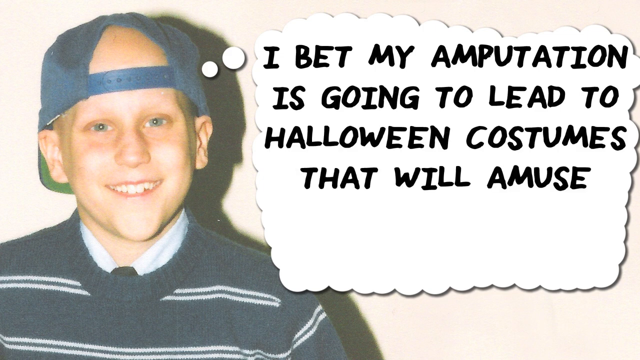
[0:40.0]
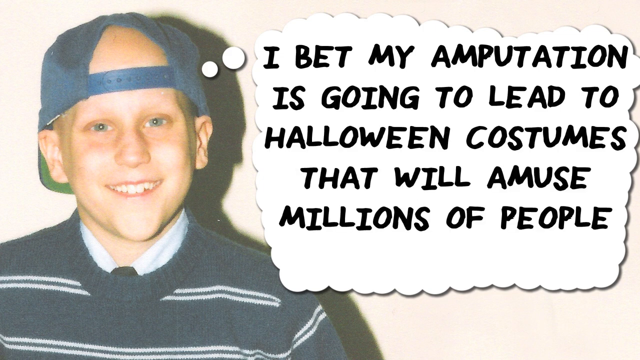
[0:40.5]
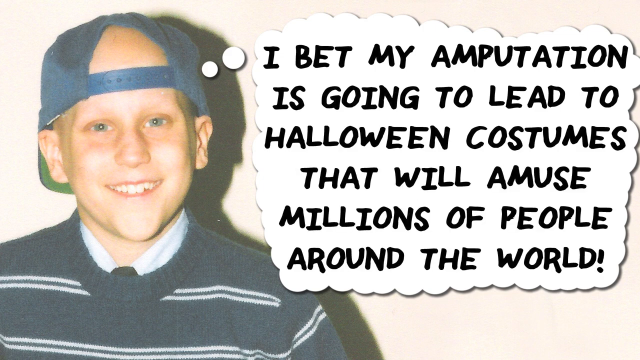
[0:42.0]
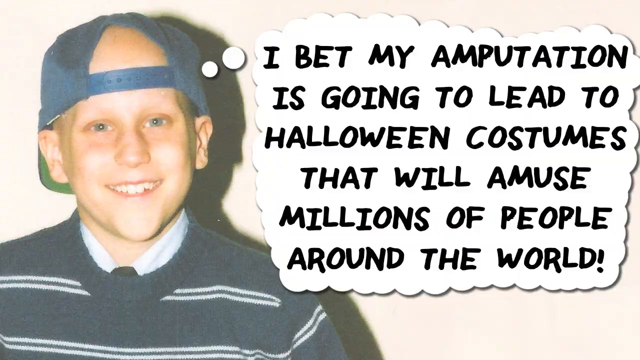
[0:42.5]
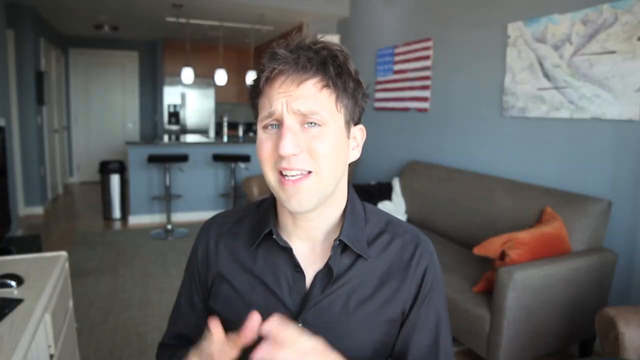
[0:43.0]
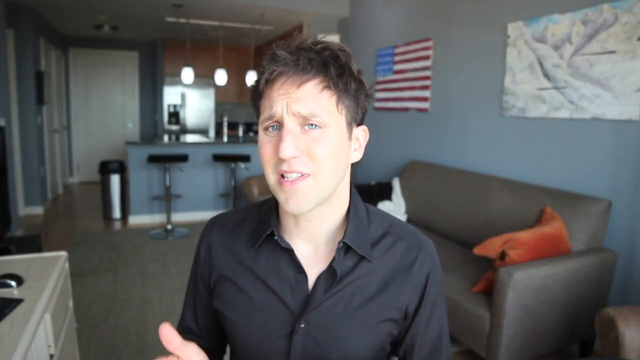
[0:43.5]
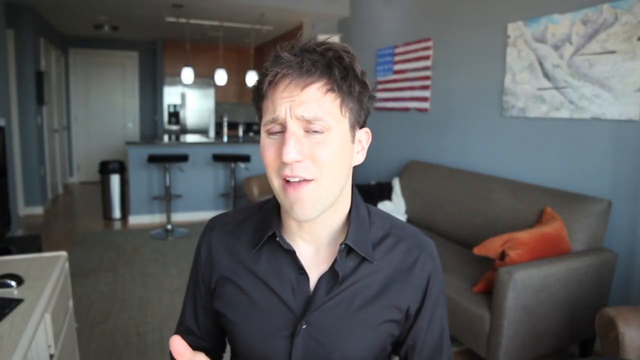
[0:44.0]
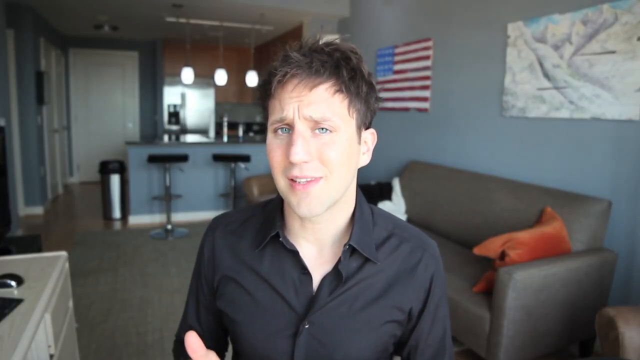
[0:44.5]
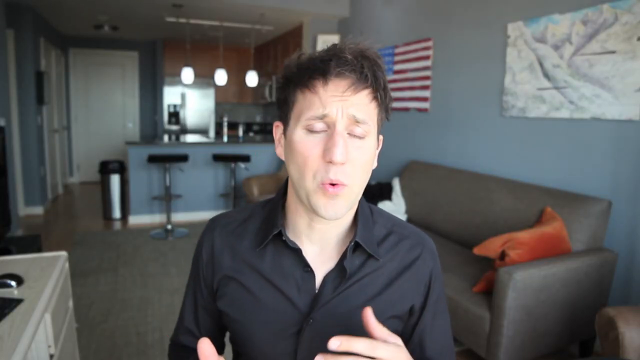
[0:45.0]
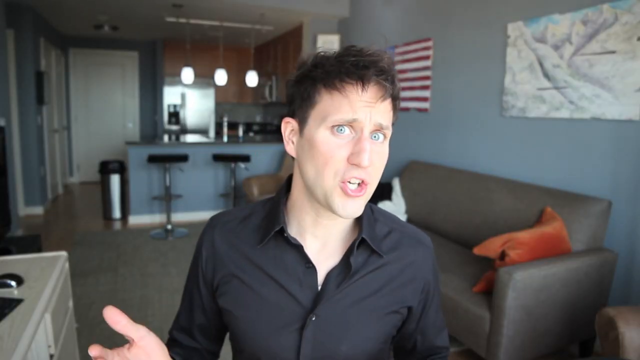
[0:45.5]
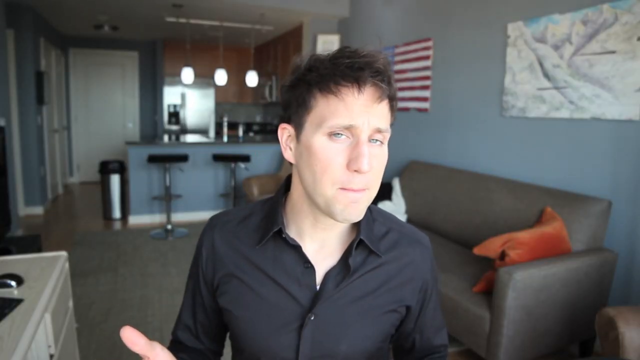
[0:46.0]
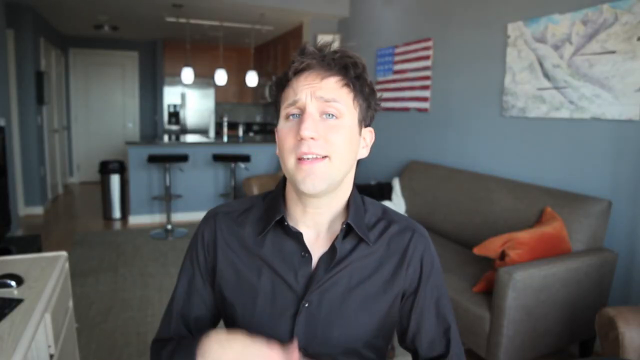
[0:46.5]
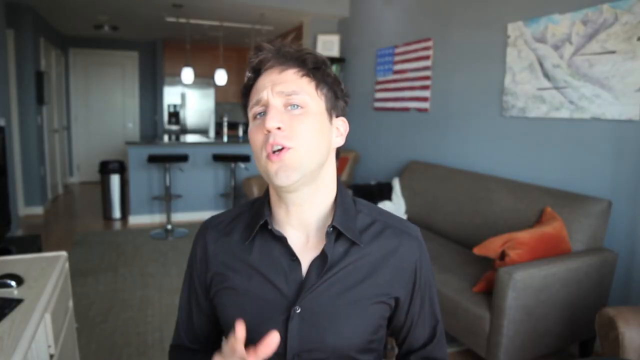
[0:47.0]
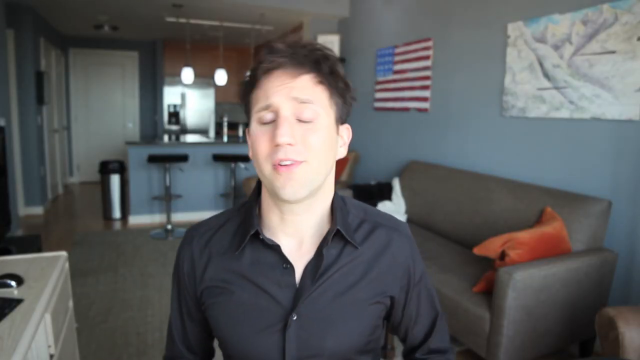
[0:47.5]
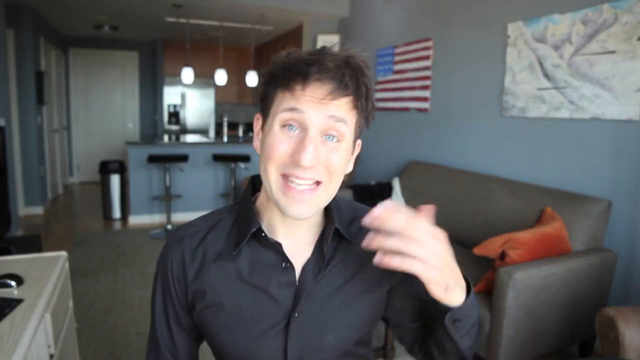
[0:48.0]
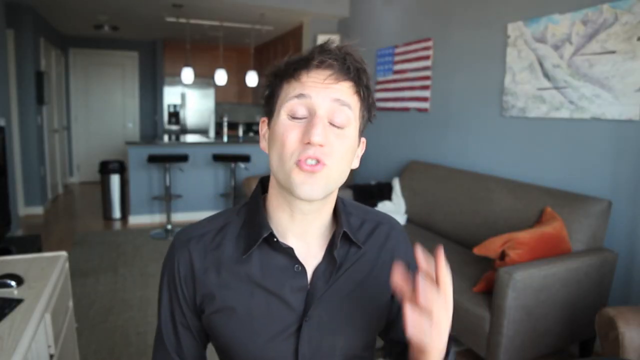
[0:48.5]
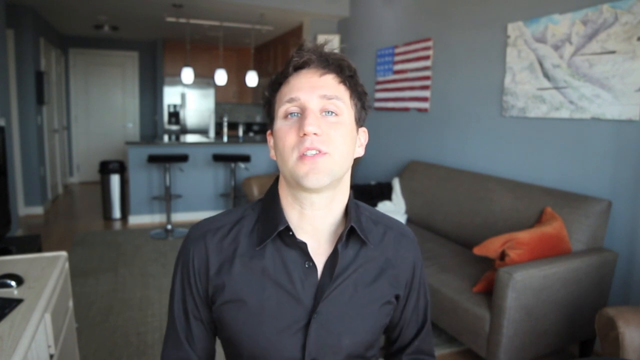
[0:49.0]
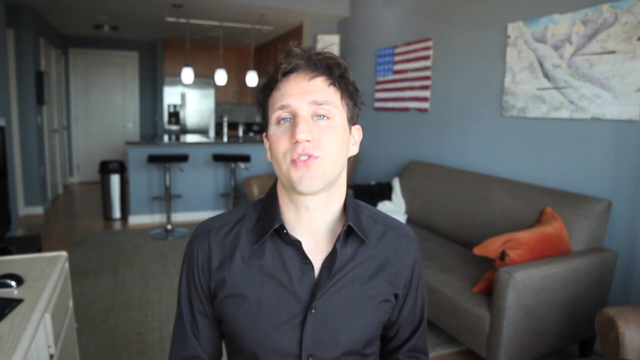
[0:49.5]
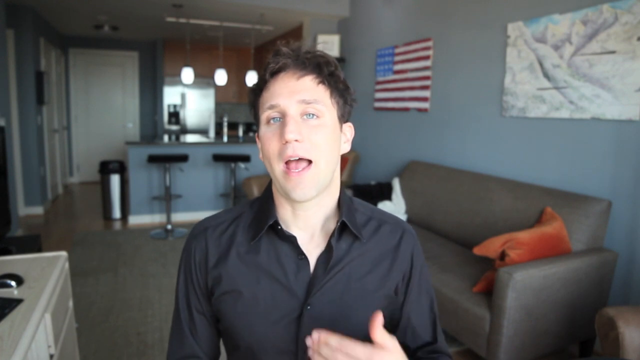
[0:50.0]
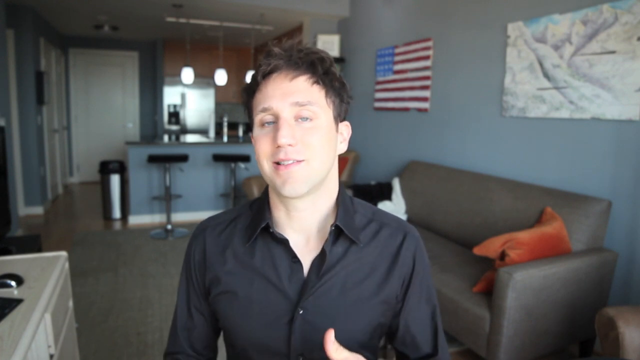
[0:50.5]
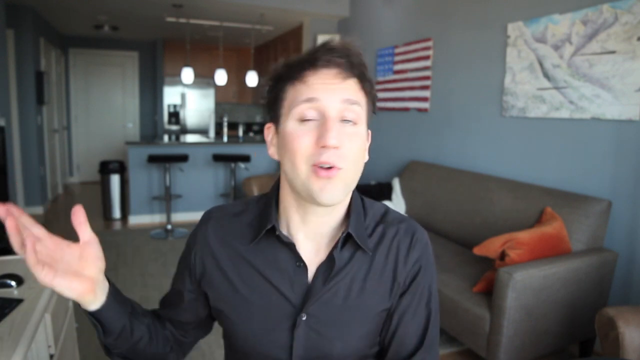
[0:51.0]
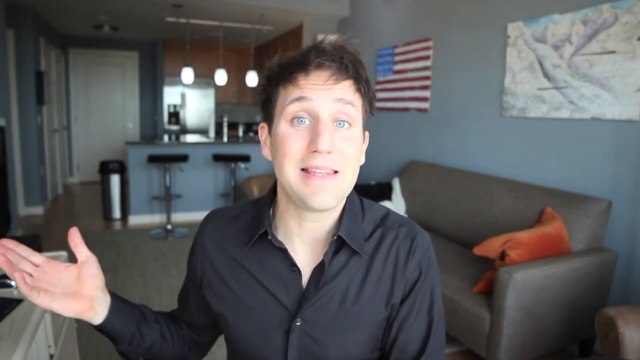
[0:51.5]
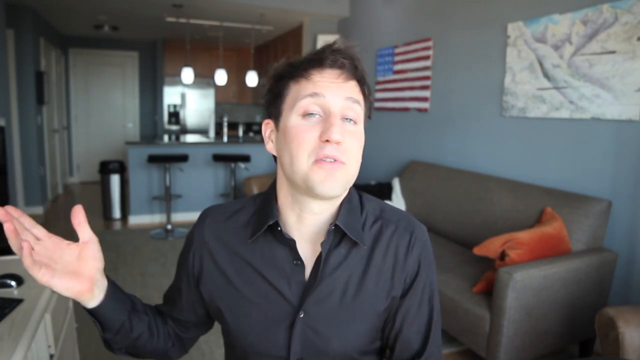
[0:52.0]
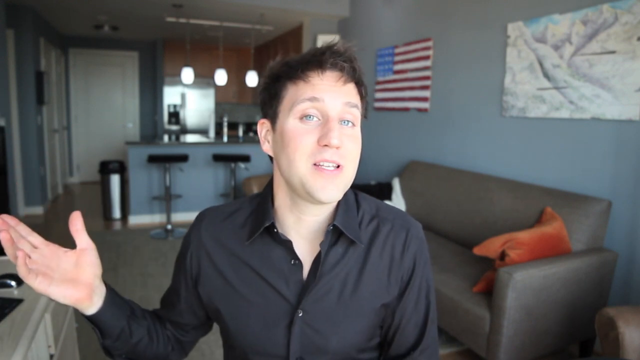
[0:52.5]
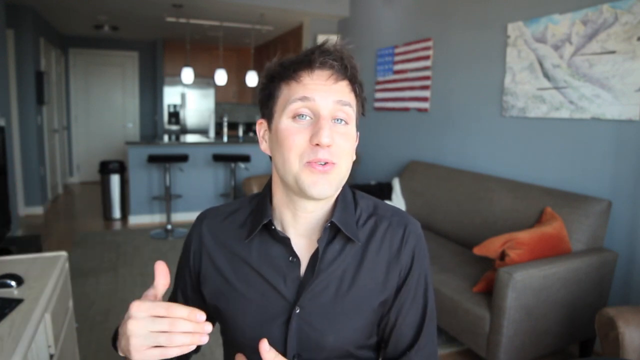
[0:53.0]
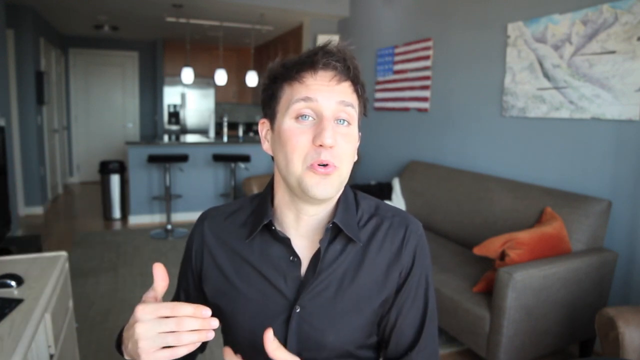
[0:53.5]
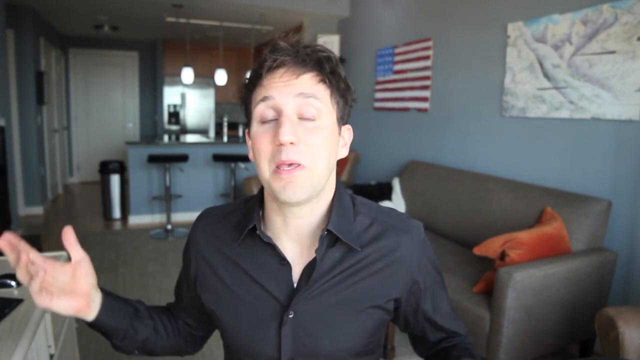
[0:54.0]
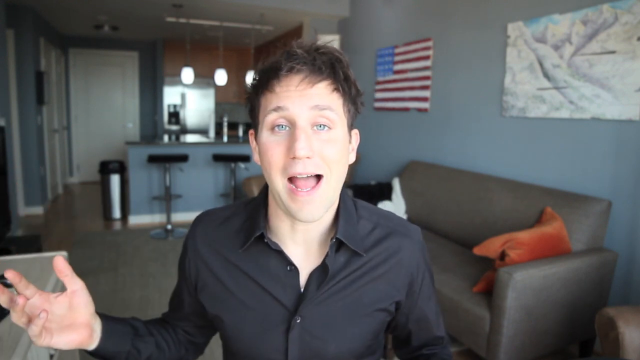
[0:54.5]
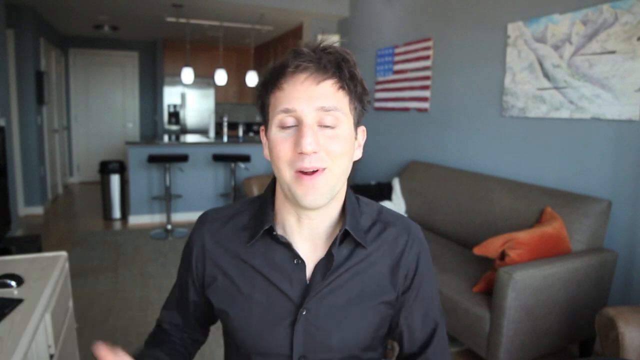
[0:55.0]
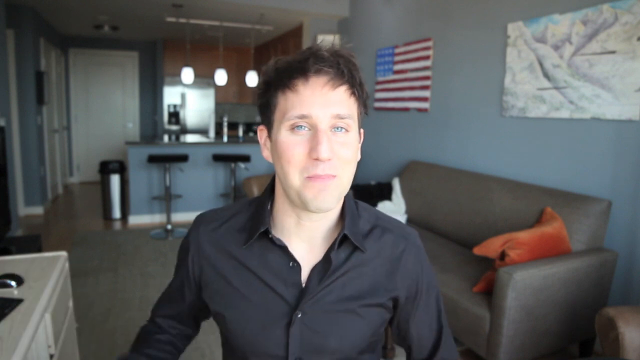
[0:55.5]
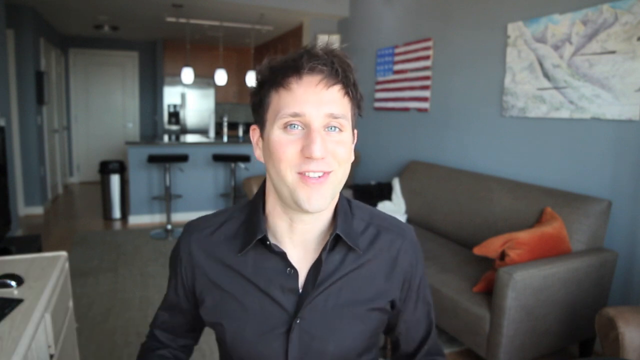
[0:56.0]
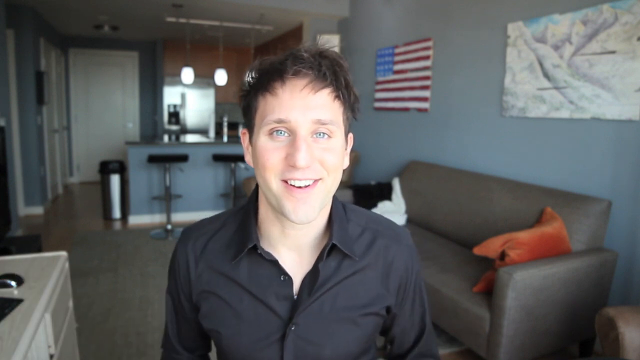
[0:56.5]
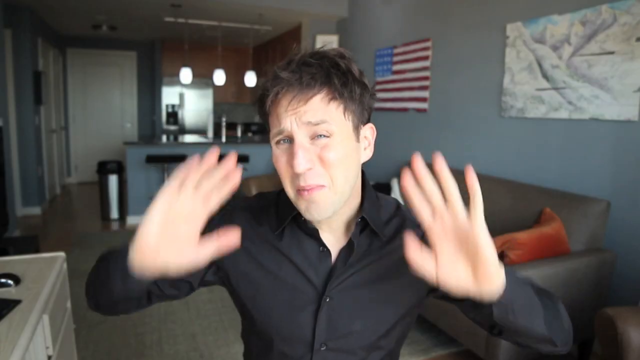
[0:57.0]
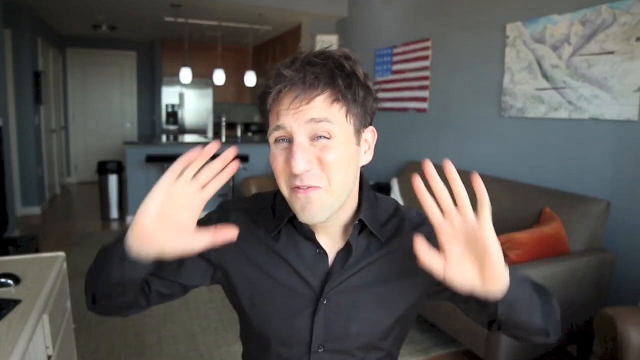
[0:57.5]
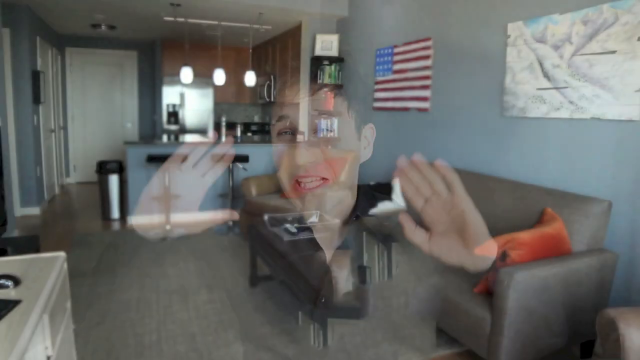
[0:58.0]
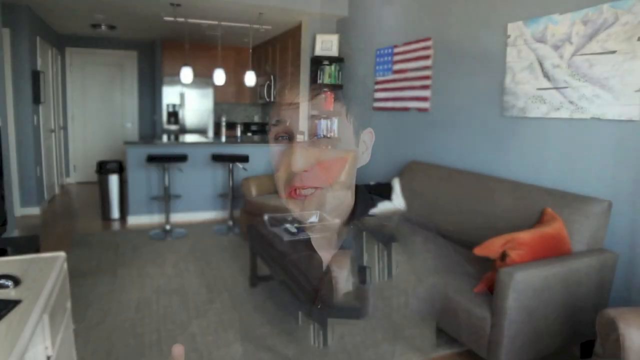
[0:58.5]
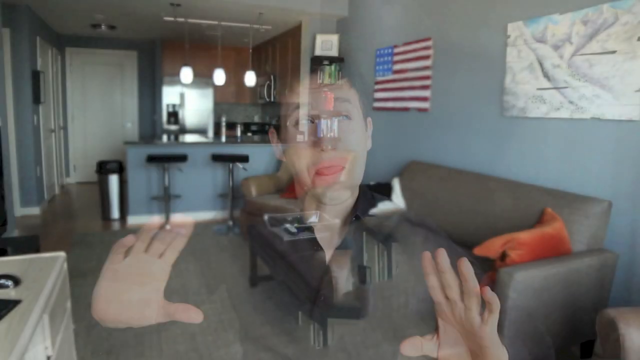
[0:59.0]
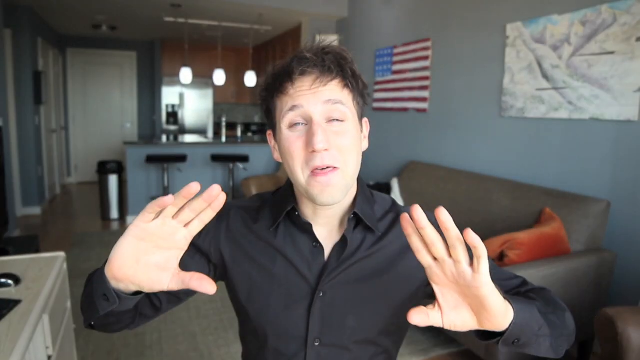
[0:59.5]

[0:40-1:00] The young man appears at an earlier age, wearing a blue baseball cap backwards; he is bald underneath the cap, very likely because of some kind of medical treatment. He has blue eyes and wears a striped sweater over a shirt with a white collar. To his right, a thought bubble reads "I bet my amputation is going to lead to Halloween costumes that will amuse millions of people." The scene cuts back to the young man in the black shirt, very likely in a more recent video. Behind him is a couch with an orange cushion or pillow; he appears to be in an apartment and addresses the camera.